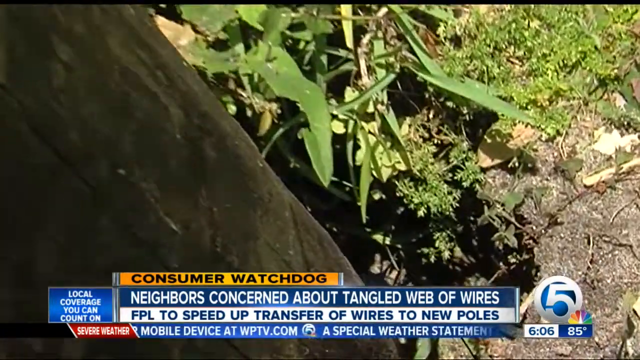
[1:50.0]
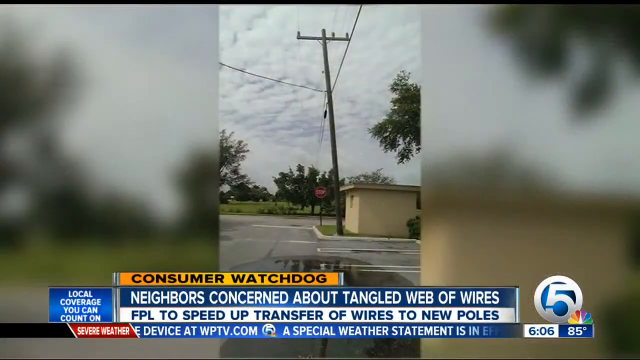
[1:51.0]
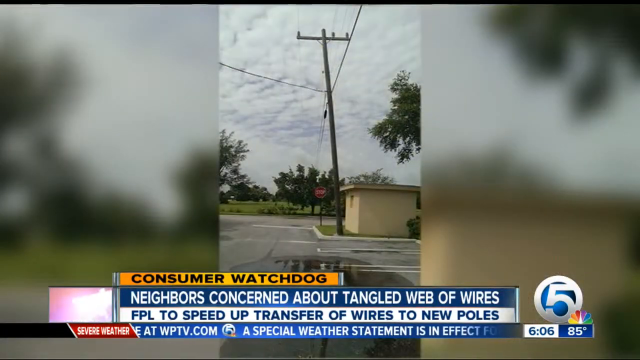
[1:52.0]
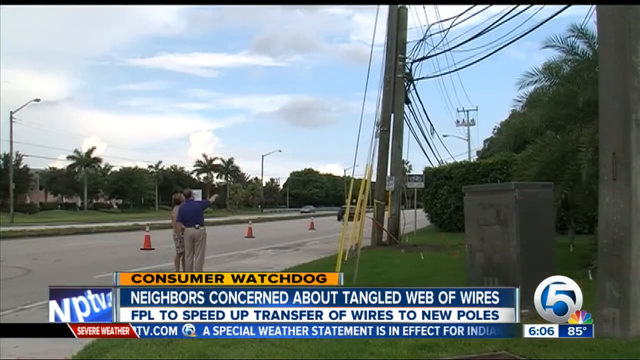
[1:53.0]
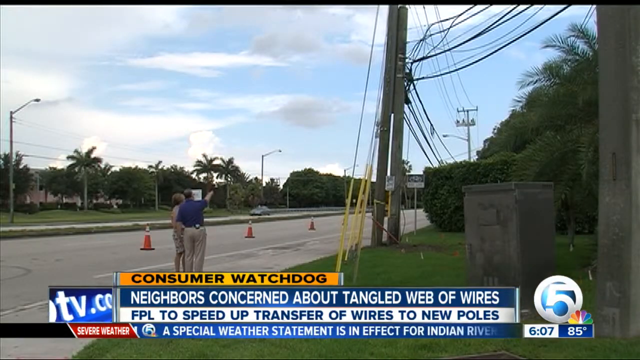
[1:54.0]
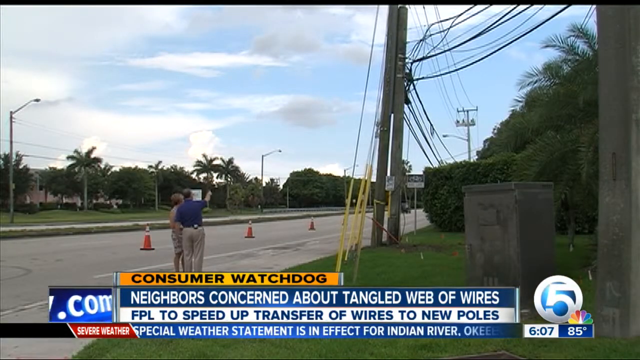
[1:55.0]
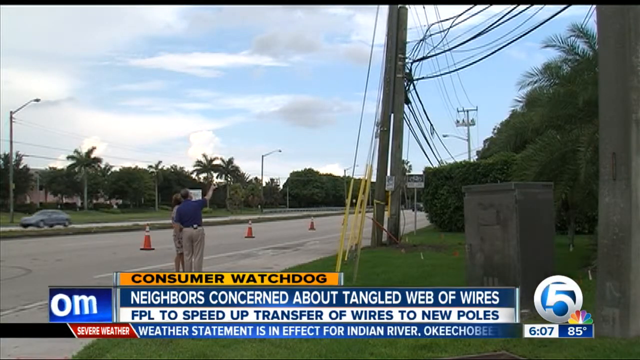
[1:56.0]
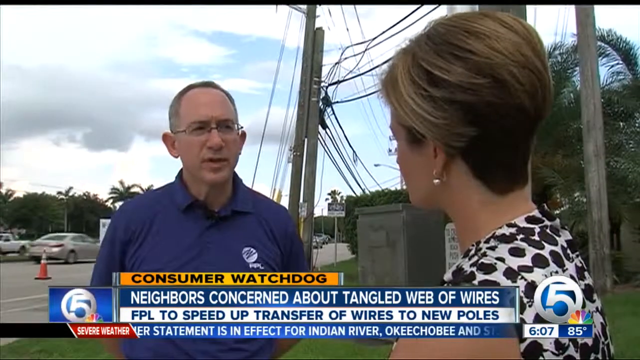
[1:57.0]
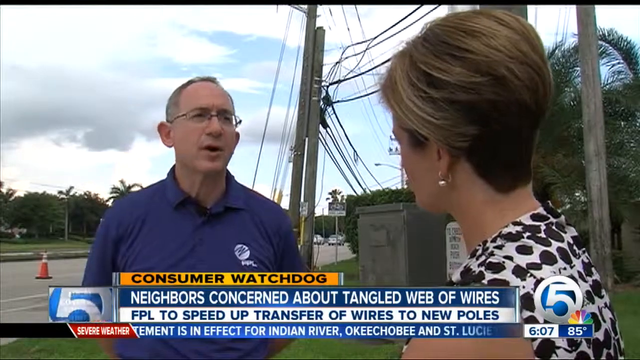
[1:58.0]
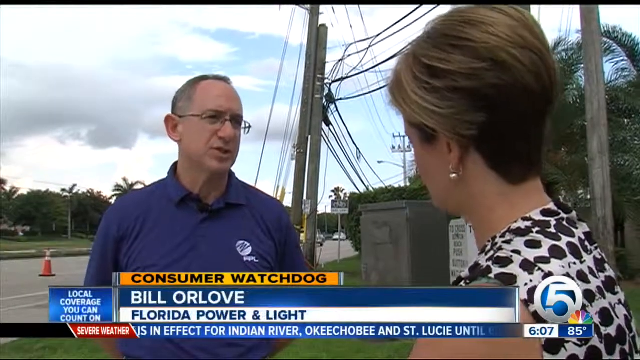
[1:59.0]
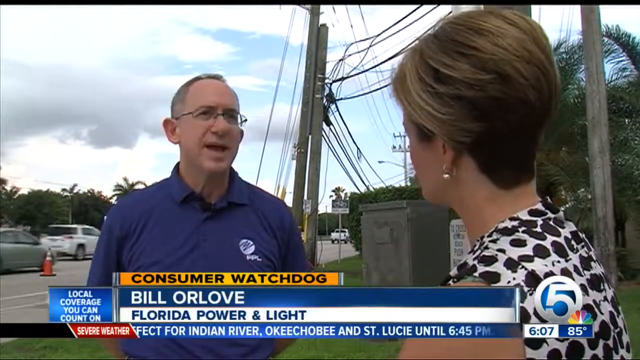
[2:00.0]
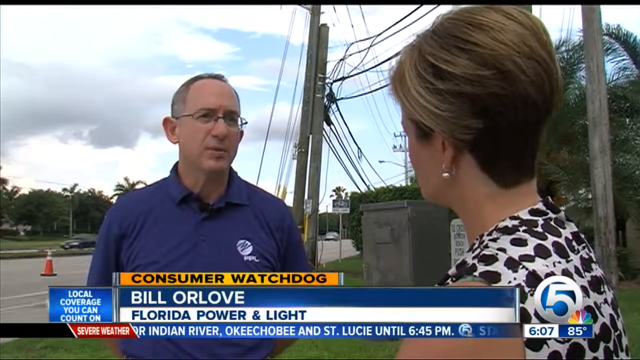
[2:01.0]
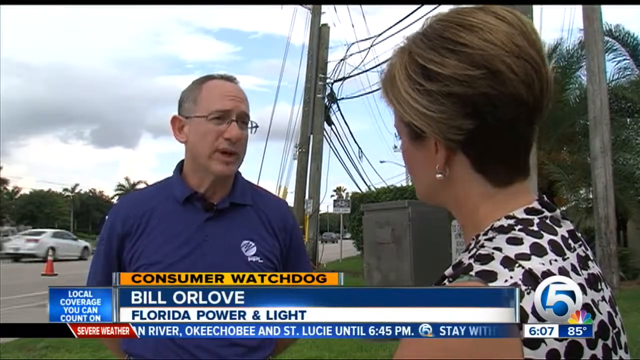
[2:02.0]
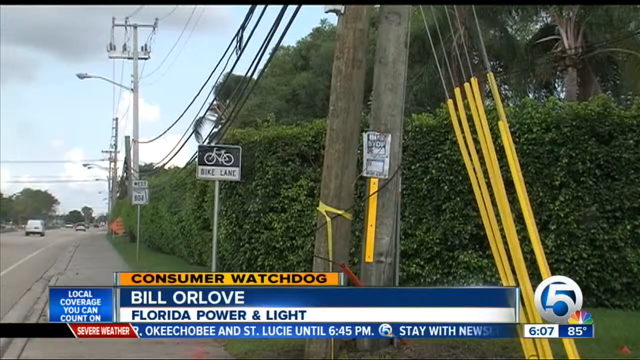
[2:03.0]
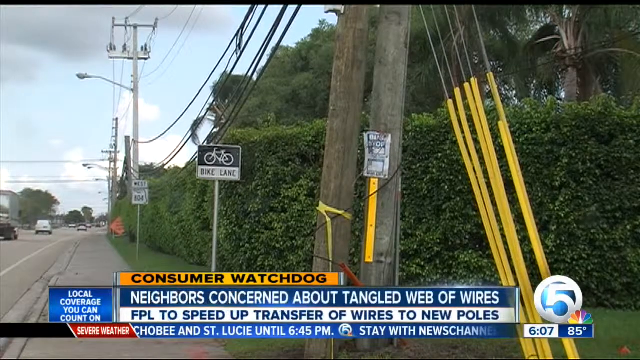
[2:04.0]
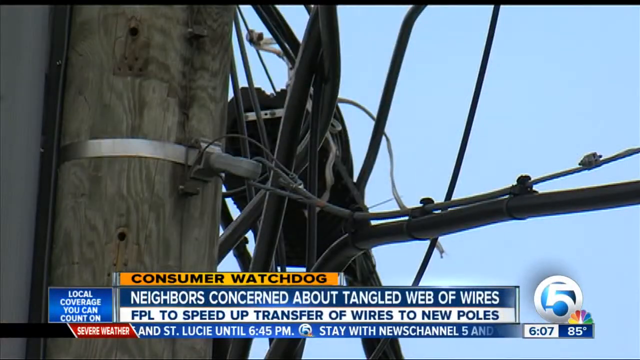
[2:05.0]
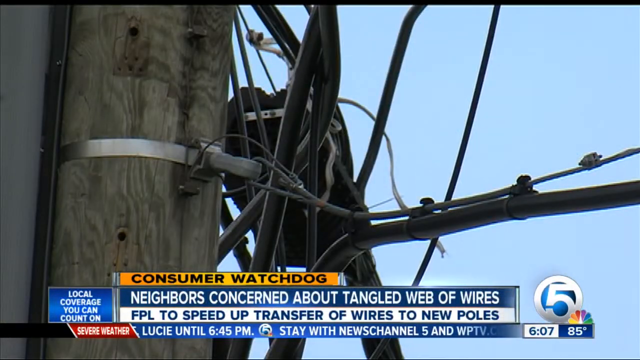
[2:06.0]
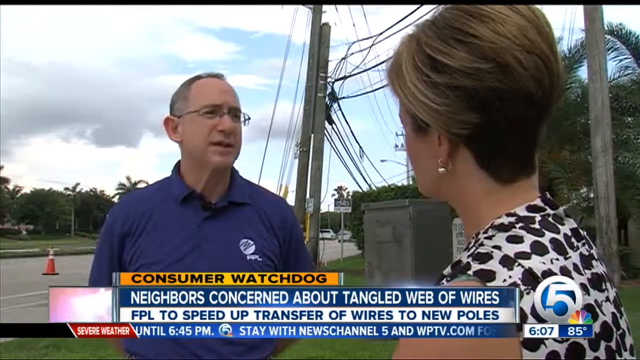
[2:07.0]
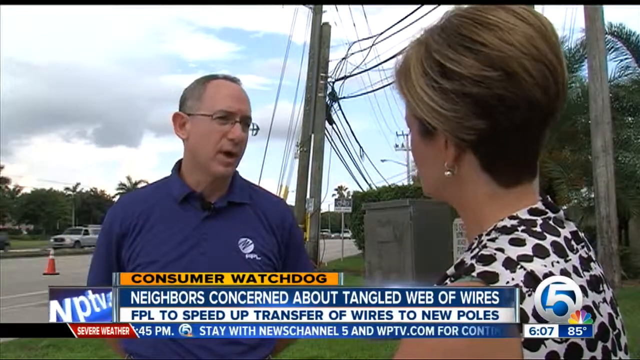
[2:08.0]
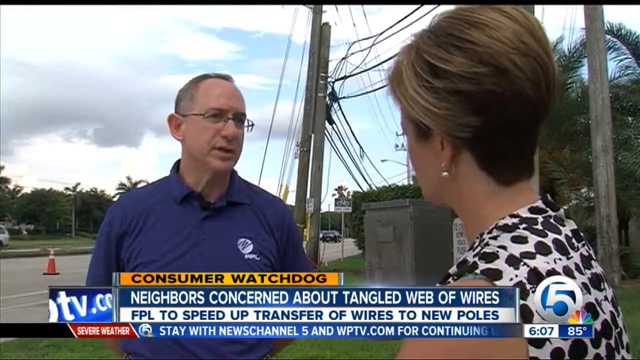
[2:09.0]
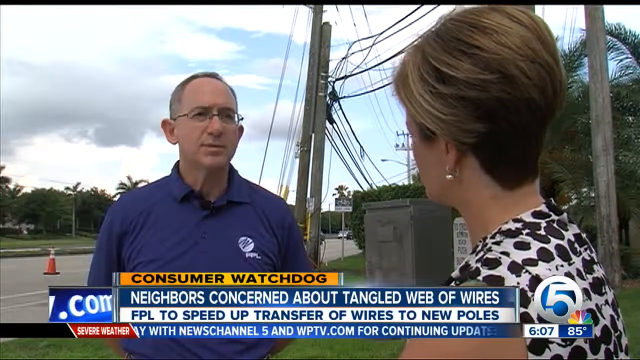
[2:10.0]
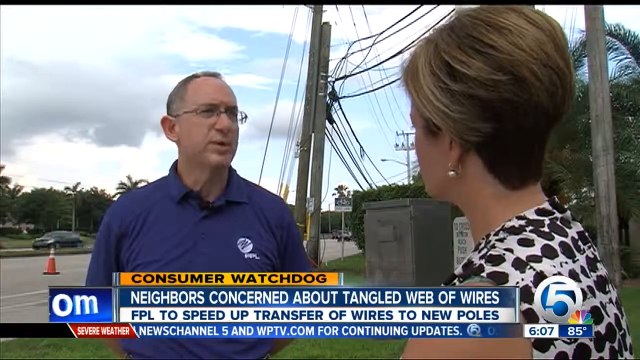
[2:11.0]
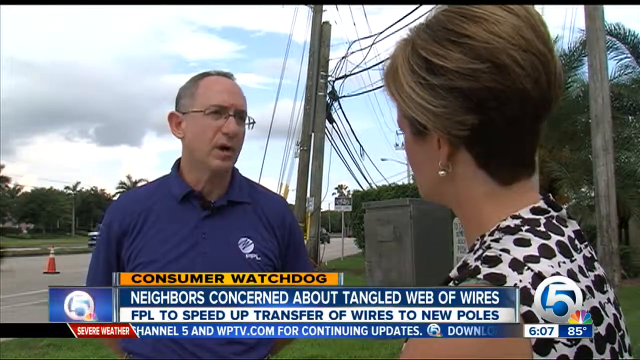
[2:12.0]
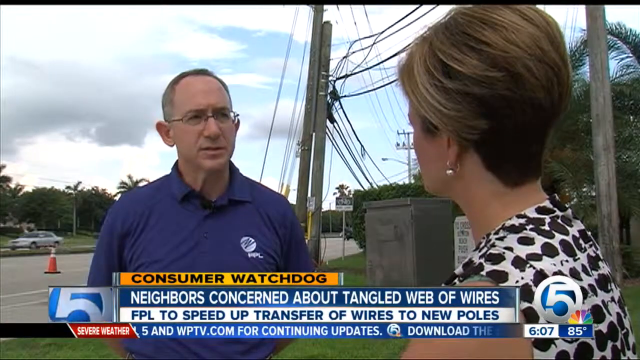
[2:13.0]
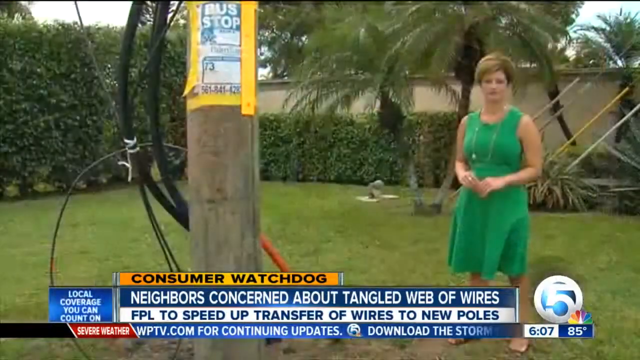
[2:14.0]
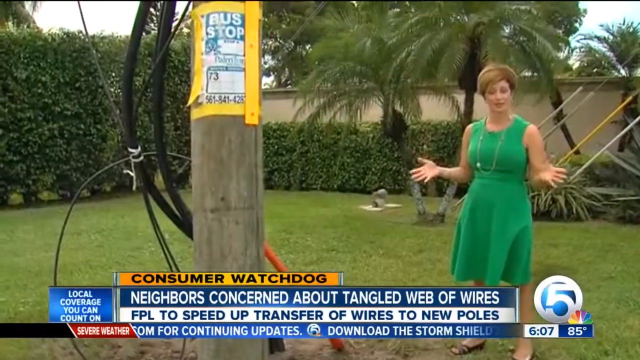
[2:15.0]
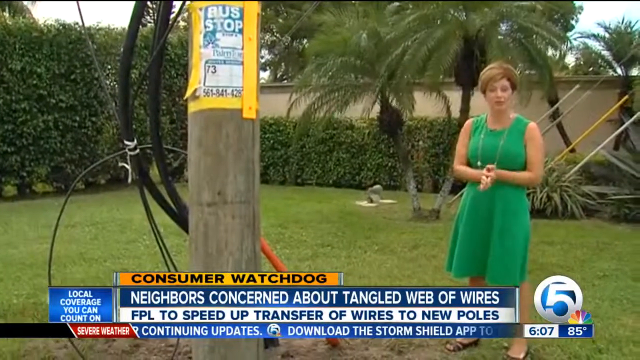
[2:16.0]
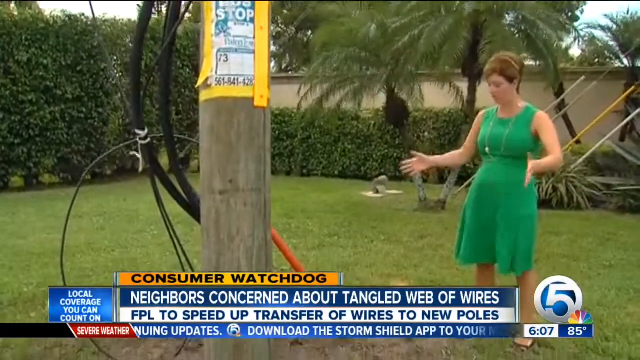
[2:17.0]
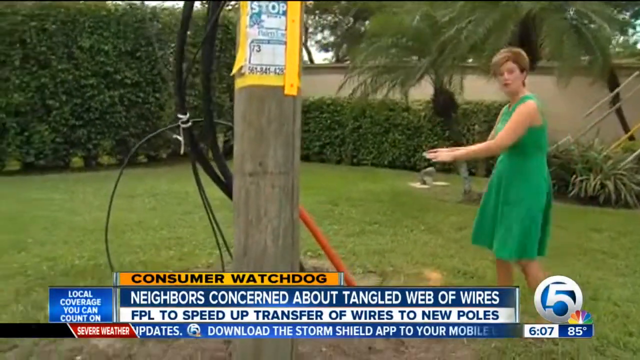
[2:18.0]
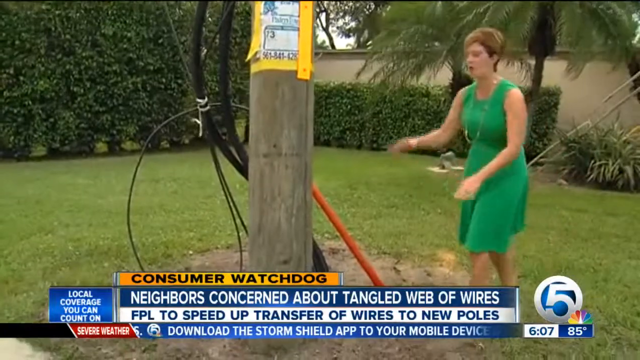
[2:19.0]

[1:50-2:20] Back outside, the camera is zoomed in on the ground, roughly where the base of a telephone pole would be. A zoomed-out shot shows one of the telephone poles, which appears slanted slightly toward the left. Two people point up at a telephone pole on their right. A reporter, possibly the same one in a different dress, wears a black and white dress and faces the left of the screen. A man on the left, facing the camera, speaks to her while she nods. The camera takes a close look at another telephone pole, then a close-up of the tangled wires, and returns to the man speaking to the reporter as she keeps nodding. The reporter then appears in the green dress on the right-hand side, speaking into the camera; for a moment she holds her hands out, palms up. She makes her way toward a telephone pole on the left and is about to put her hand on it.